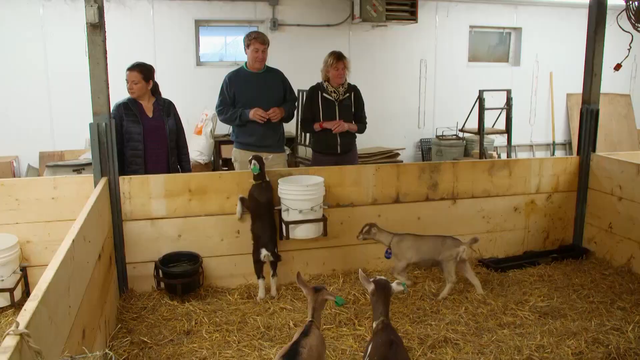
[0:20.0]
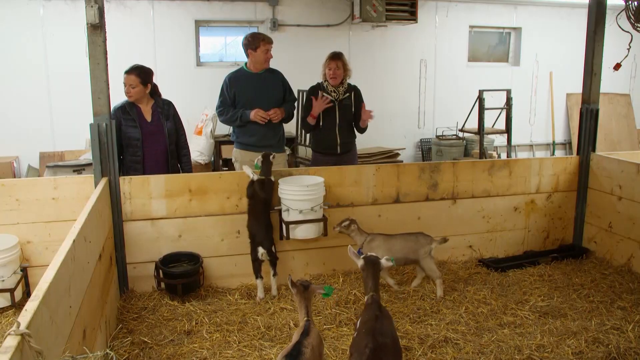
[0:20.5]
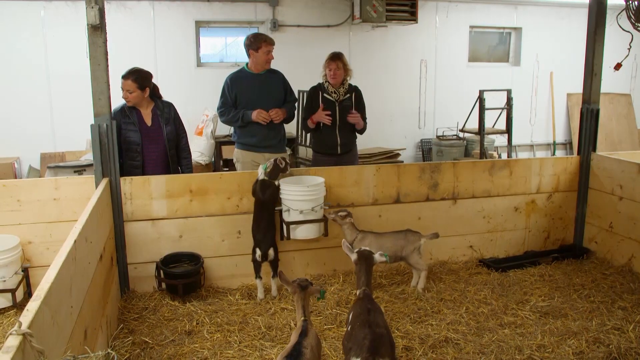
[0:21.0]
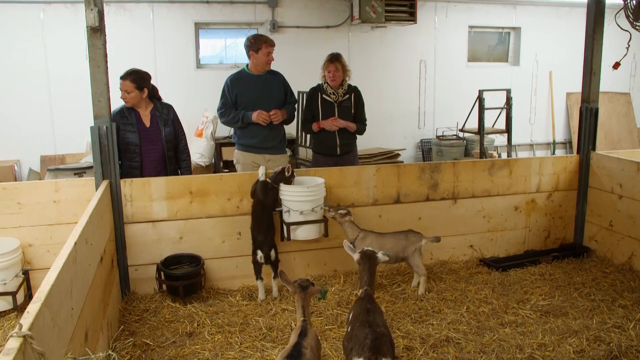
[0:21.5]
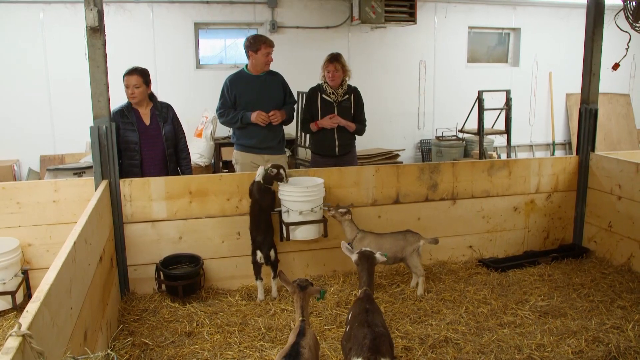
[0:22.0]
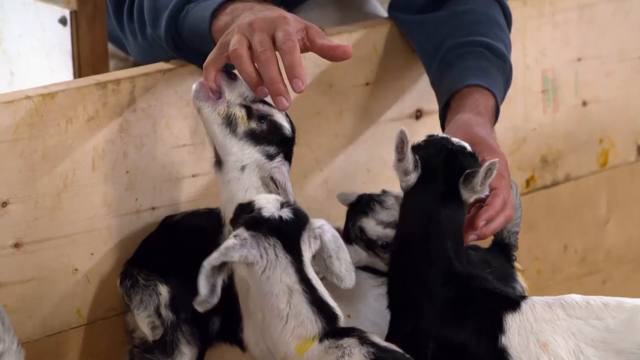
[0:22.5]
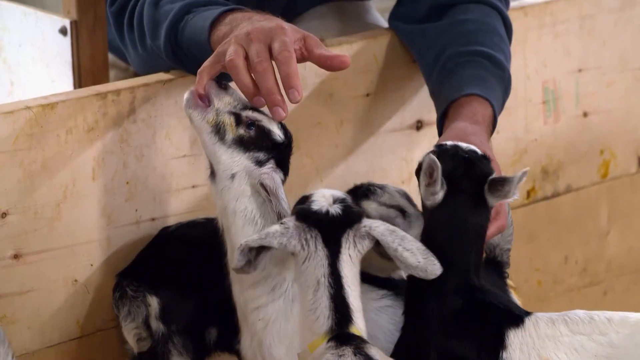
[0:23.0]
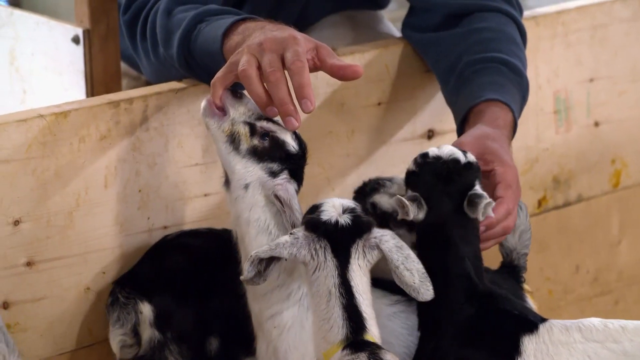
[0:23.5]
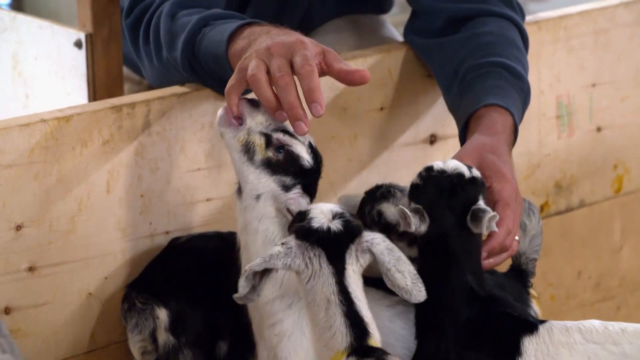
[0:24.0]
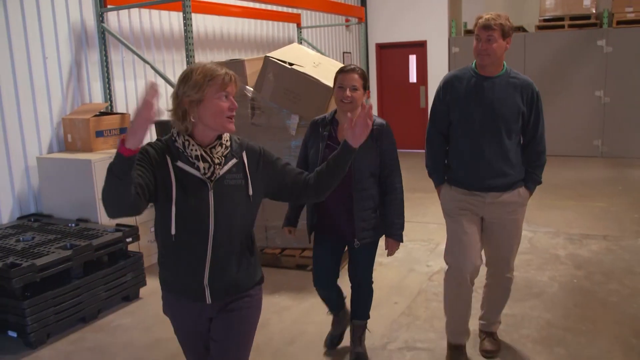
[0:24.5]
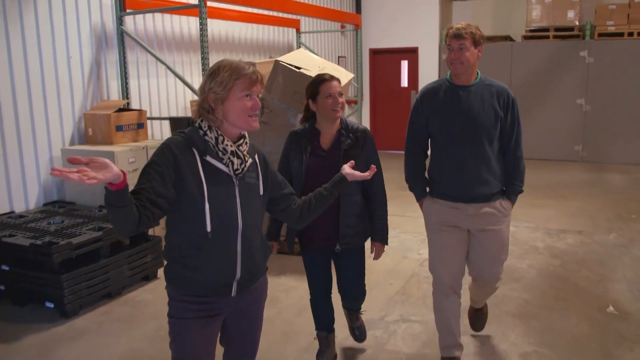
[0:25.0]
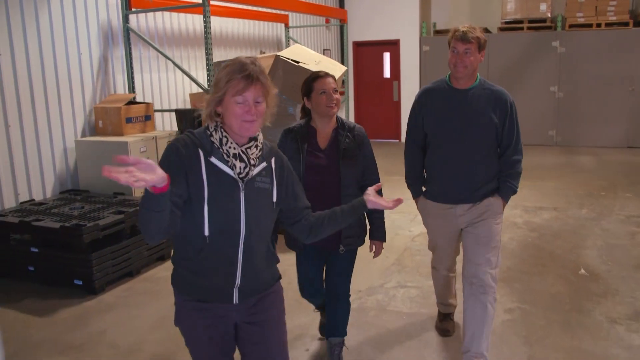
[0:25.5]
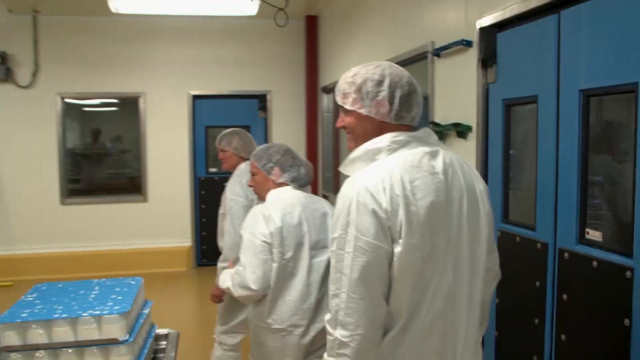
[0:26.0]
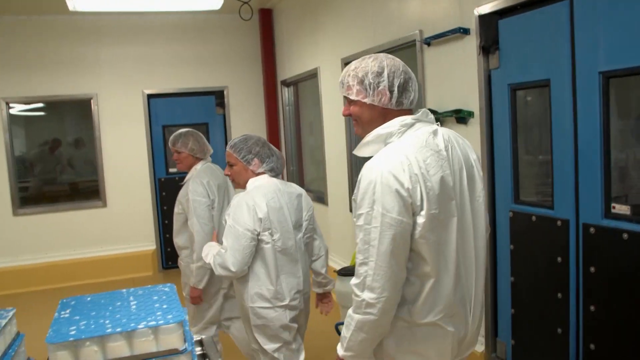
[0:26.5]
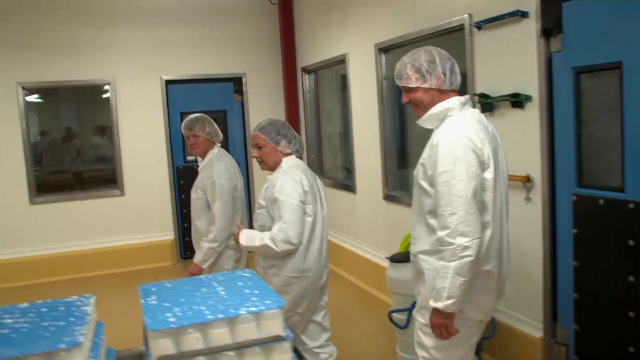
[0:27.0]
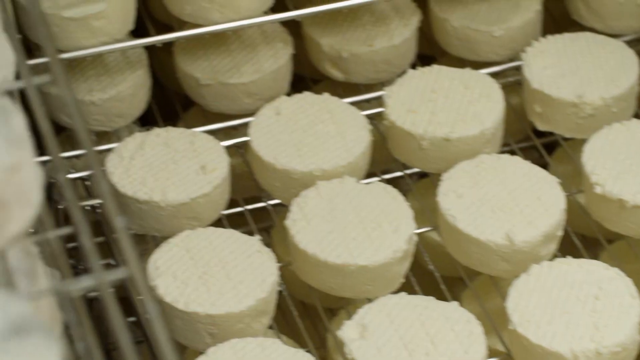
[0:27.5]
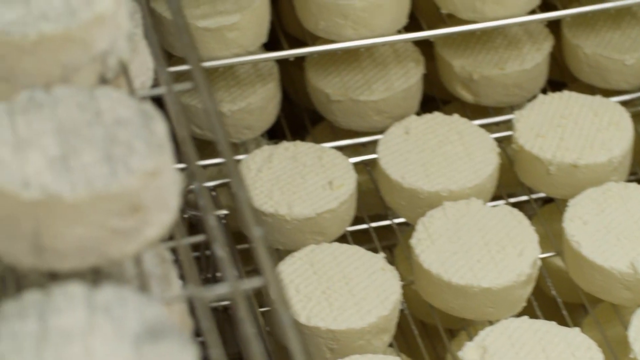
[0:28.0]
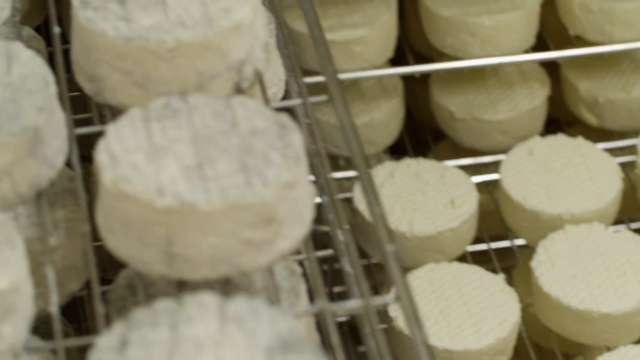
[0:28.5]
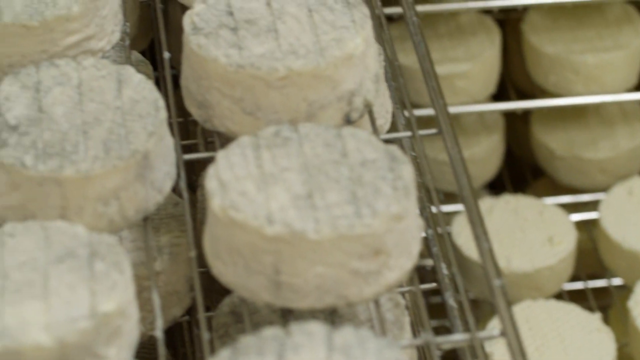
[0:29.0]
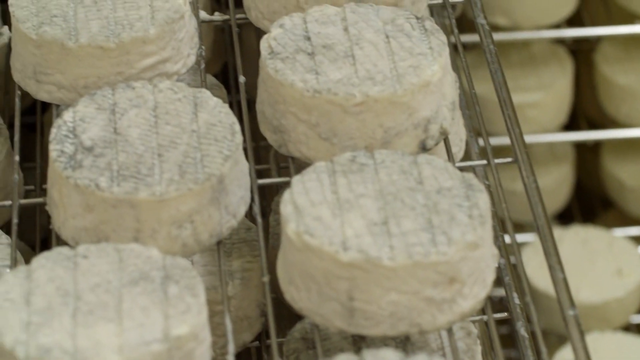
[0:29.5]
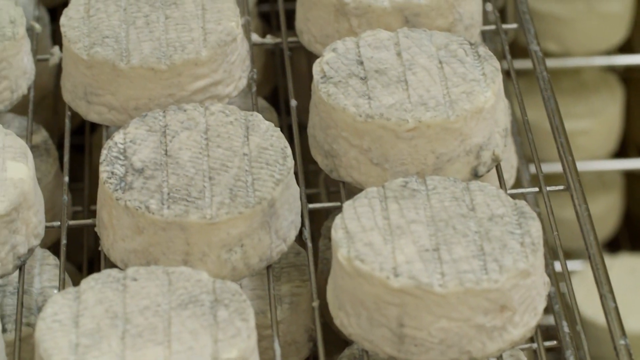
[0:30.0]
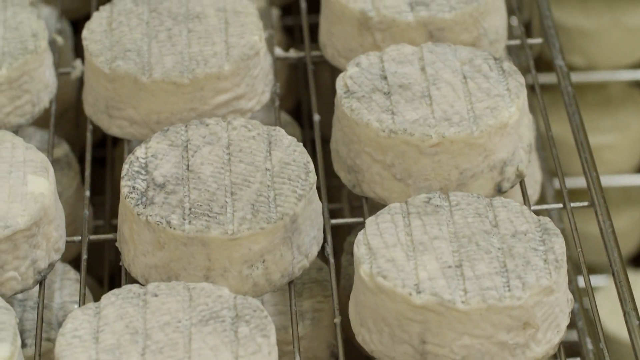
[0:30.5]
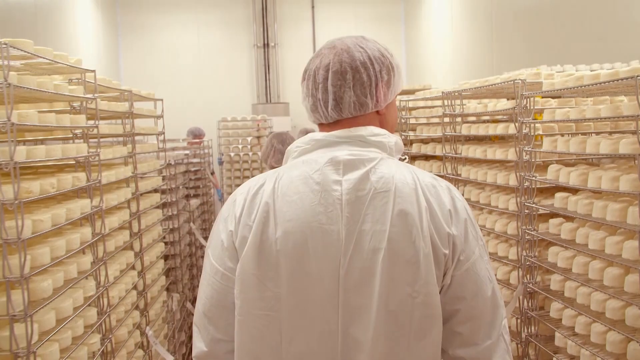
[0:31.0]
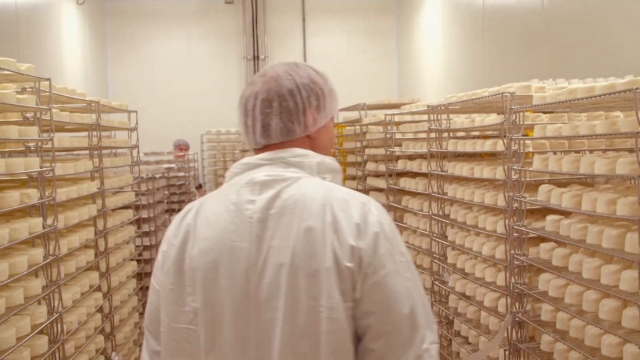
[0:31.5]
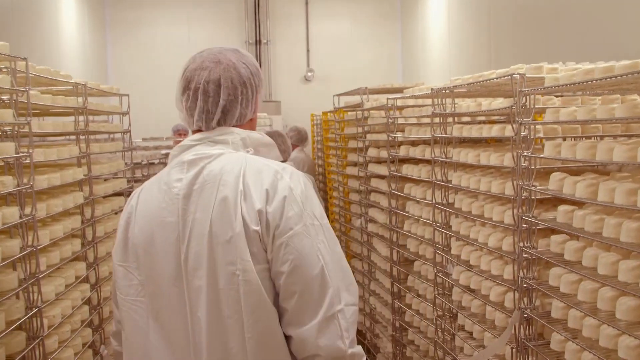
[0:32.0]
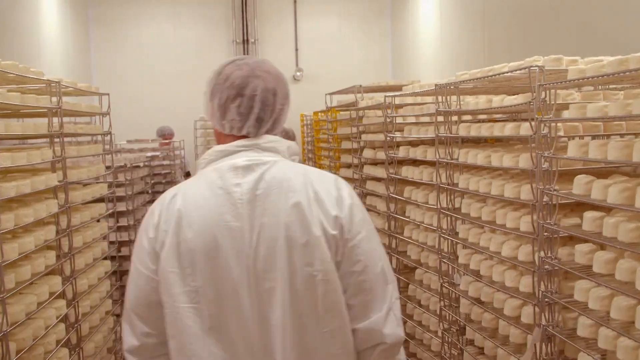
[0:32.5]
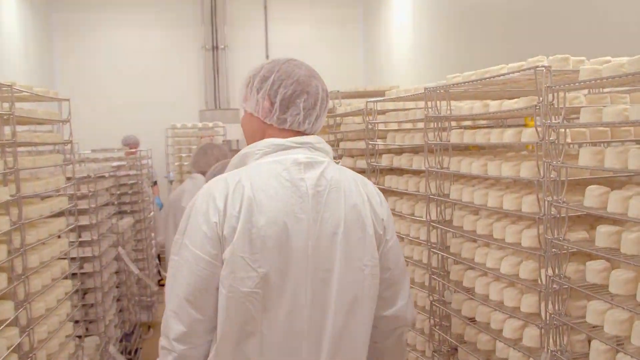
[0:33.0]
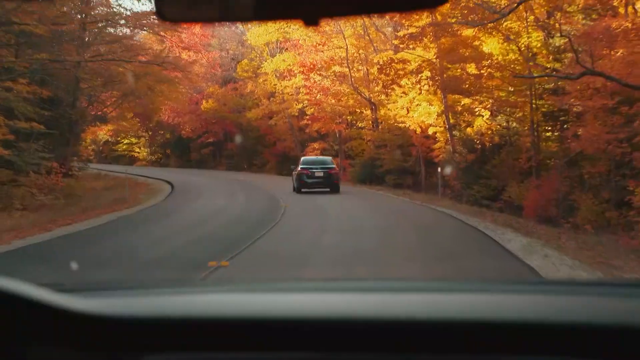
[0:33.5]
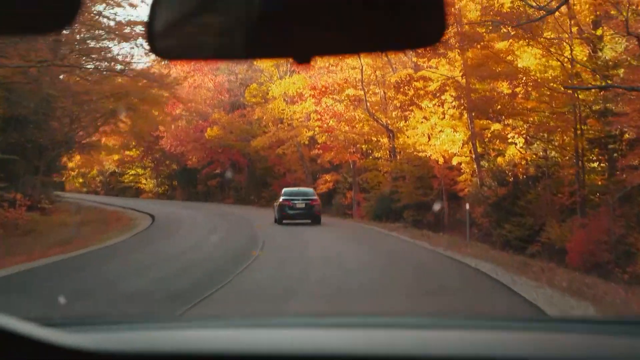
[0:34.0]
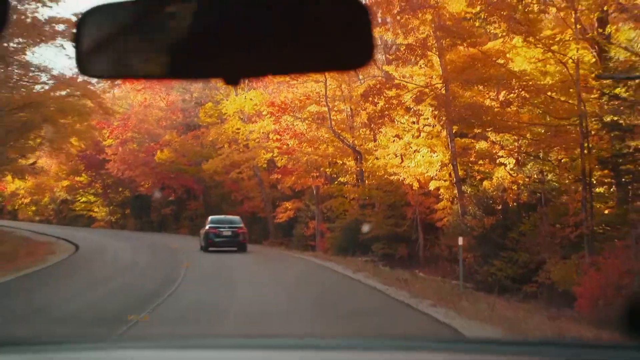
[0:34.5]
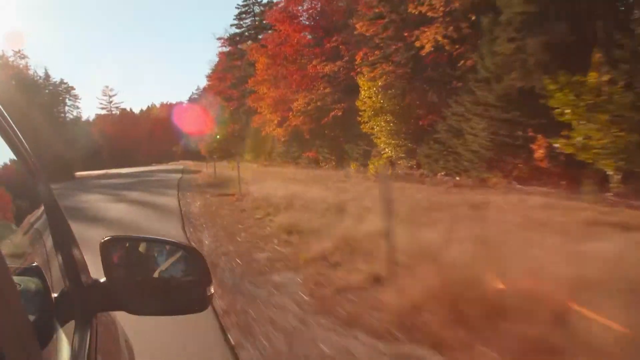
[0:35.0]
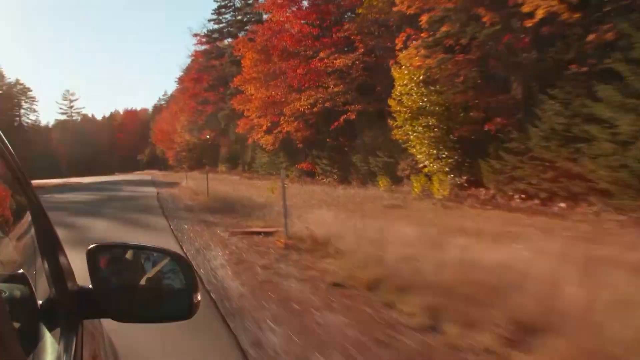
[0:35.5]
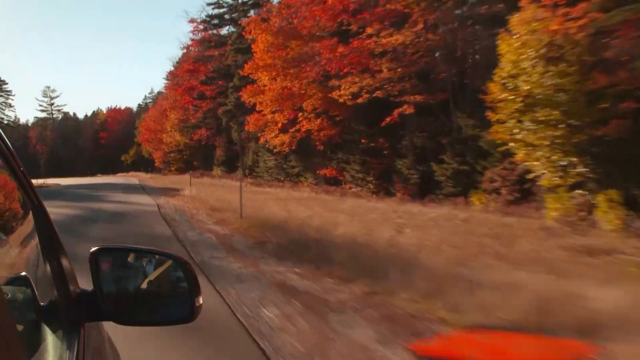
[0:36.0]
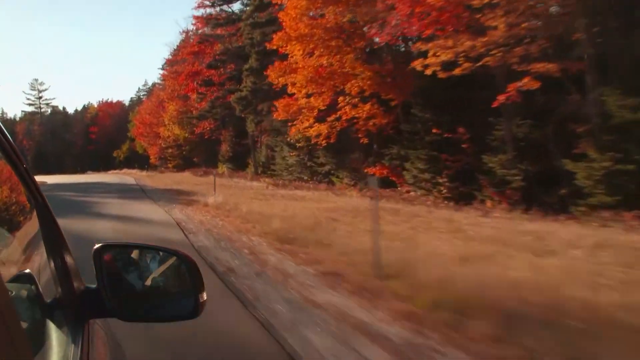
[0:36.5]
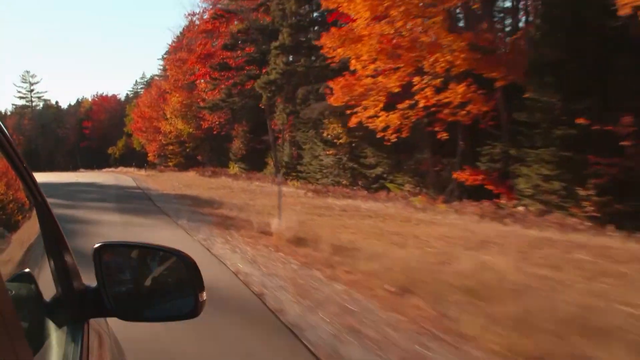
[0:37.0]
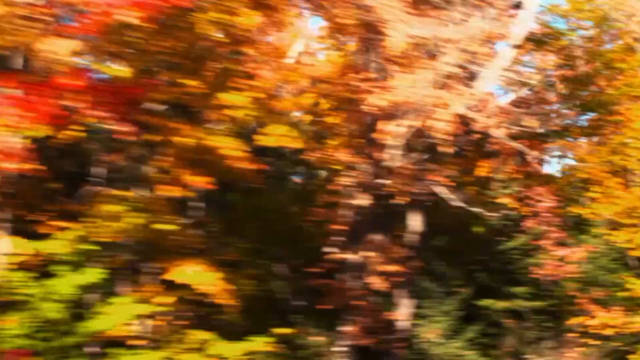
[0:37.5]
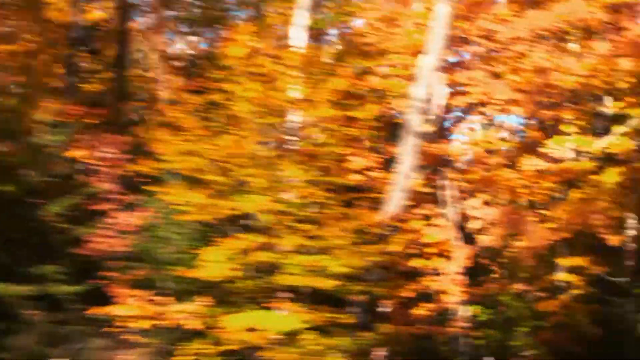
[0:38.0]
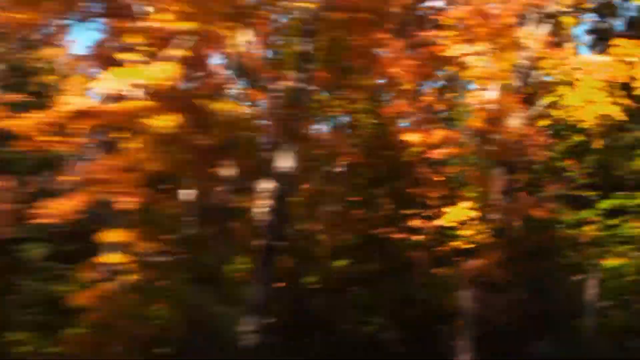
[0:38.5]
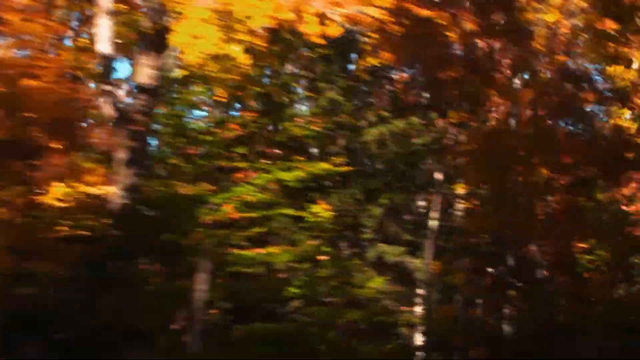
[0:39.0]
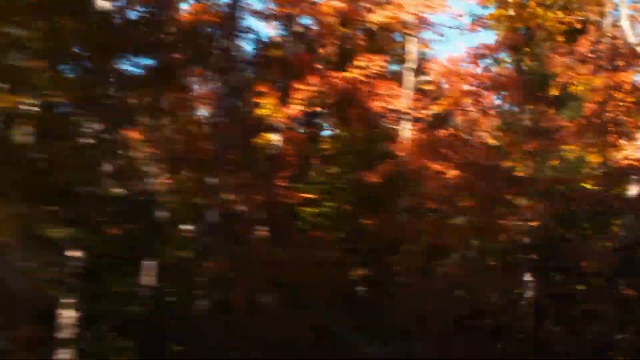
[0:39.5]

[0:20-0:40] Three people stand behind an animal pen: a woman with a dark ponytail on the left, a taller man in the middle wearing pale trousers and a dark blue jumper, and a woman with blonde hair on the right. In the wooden pen at the front there is straw on the floor and four baby goats, and white buckets are fixed to the side of the pen. The dark brown goat puts its front feet on the top of the pen. The goats then lick the fingers of one of the people. The three people walk, following the woman with blonde hair, through a farm-type building. They are then seen wearing white coats and protective hair nets, before several blocks of round cheese appear on a silver metal rack.